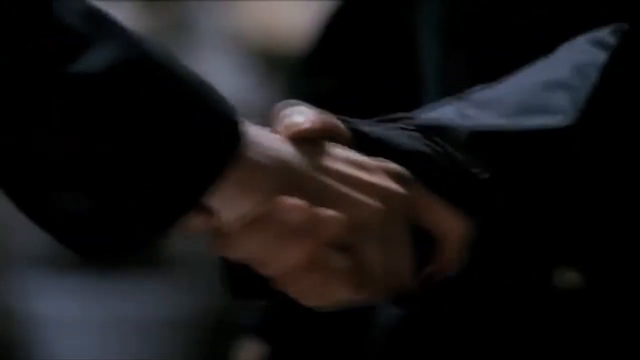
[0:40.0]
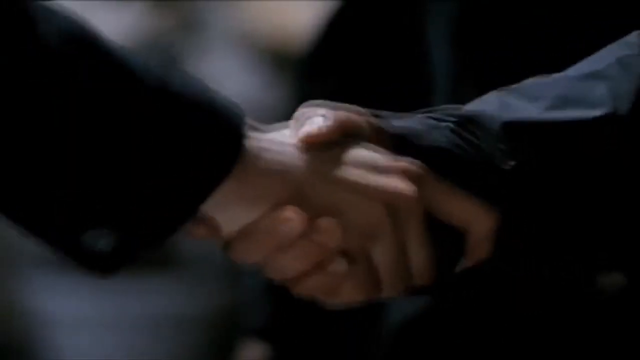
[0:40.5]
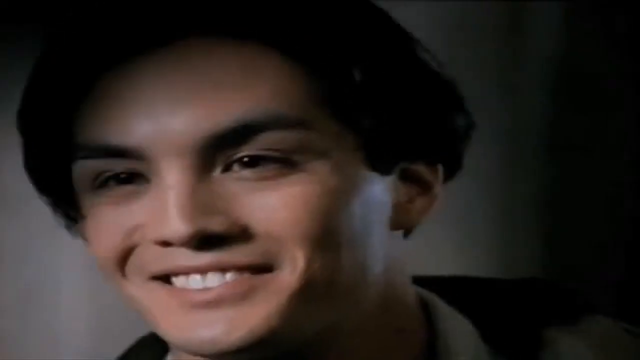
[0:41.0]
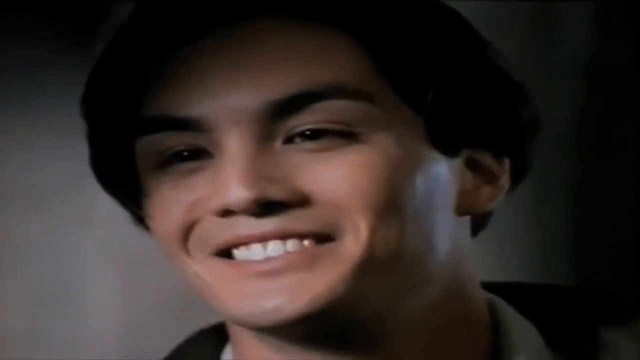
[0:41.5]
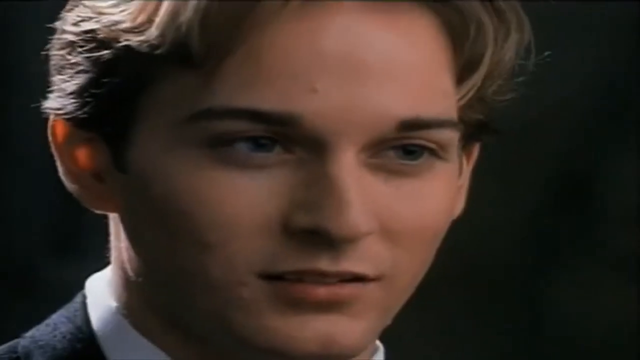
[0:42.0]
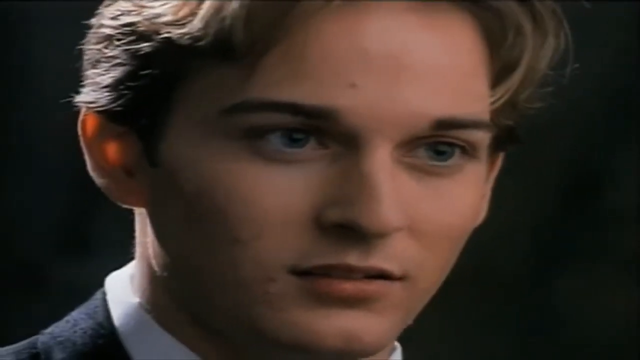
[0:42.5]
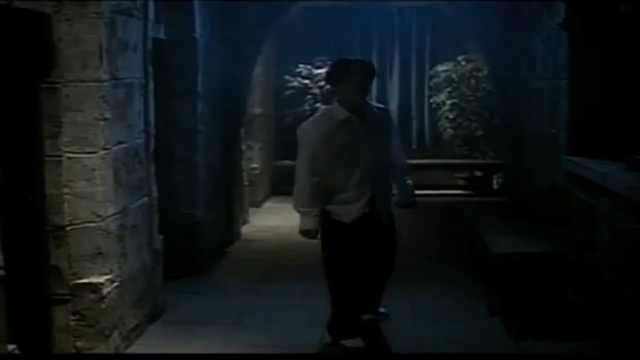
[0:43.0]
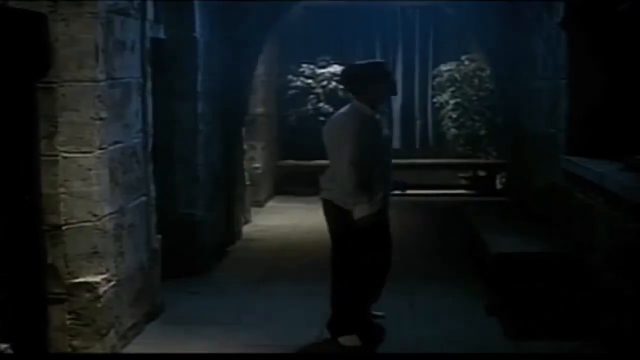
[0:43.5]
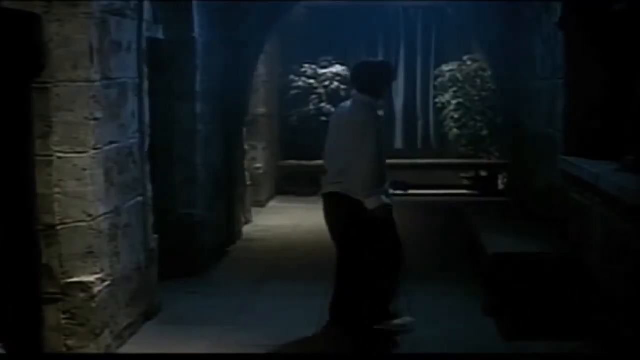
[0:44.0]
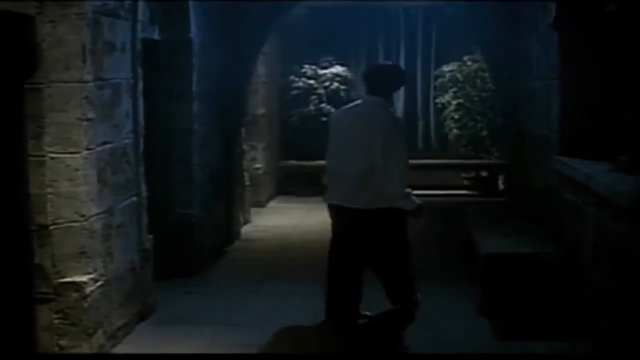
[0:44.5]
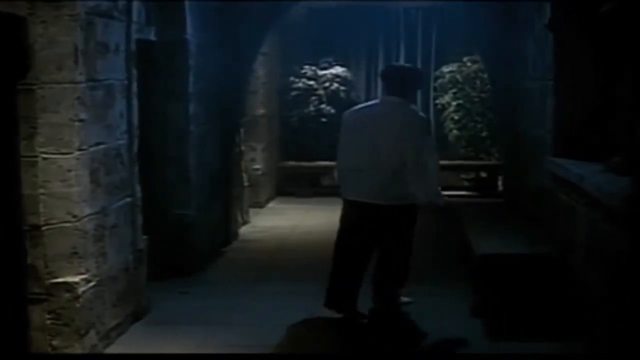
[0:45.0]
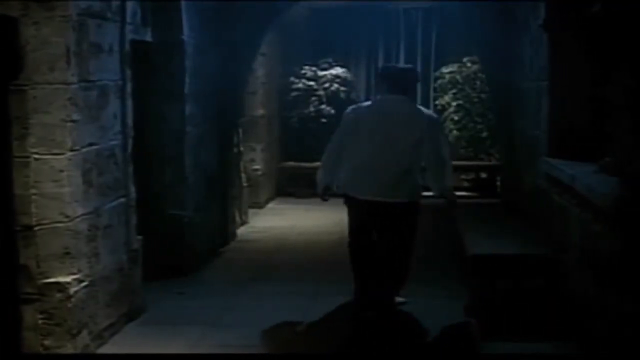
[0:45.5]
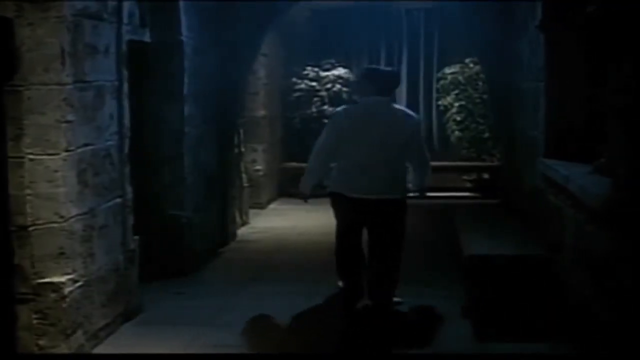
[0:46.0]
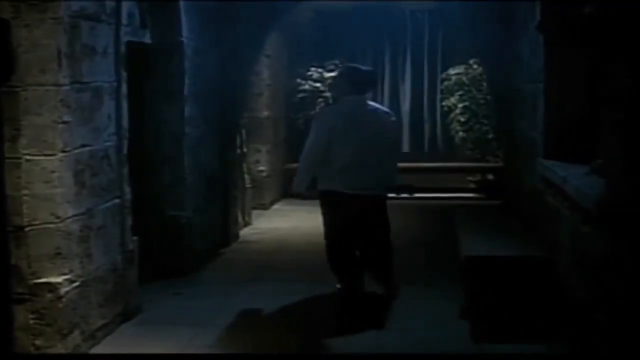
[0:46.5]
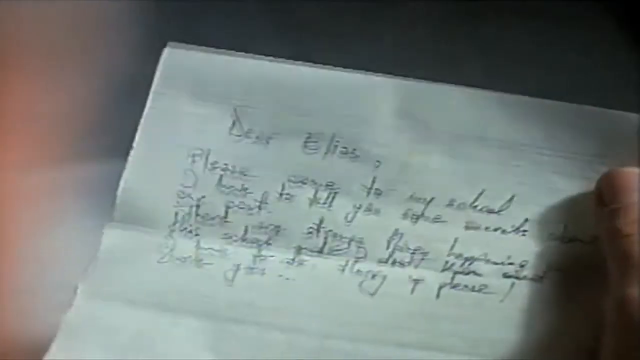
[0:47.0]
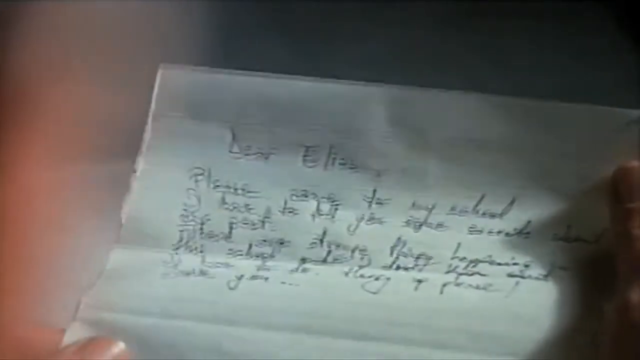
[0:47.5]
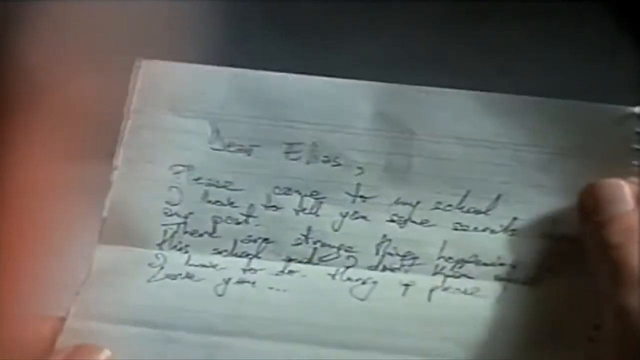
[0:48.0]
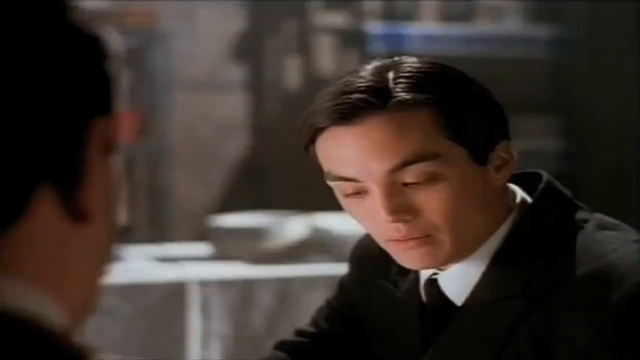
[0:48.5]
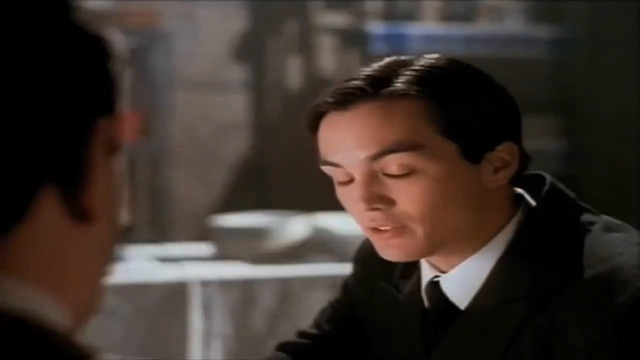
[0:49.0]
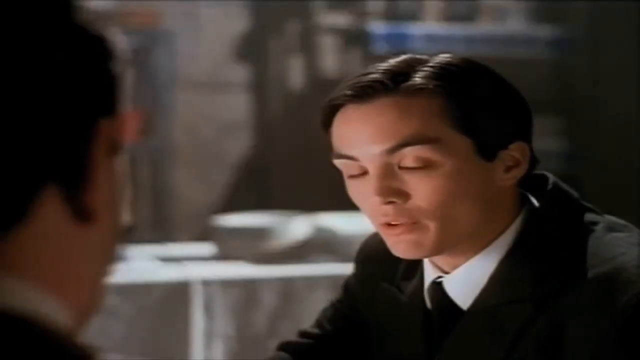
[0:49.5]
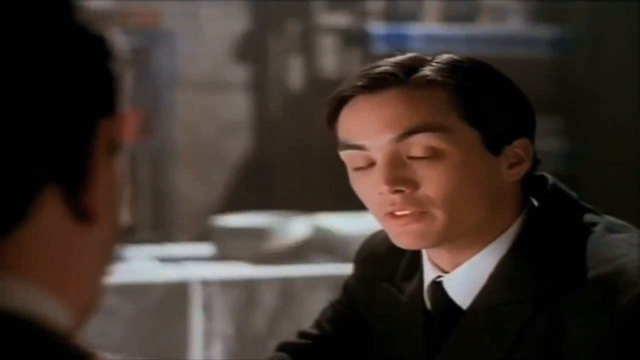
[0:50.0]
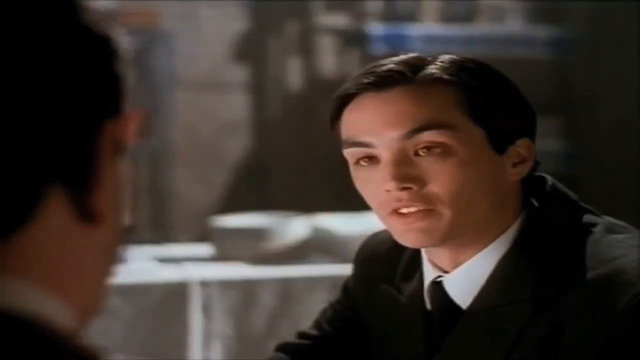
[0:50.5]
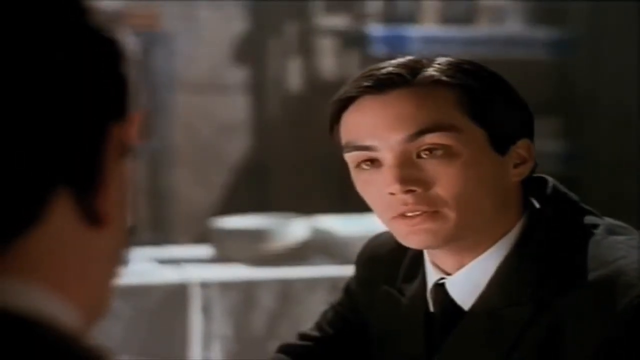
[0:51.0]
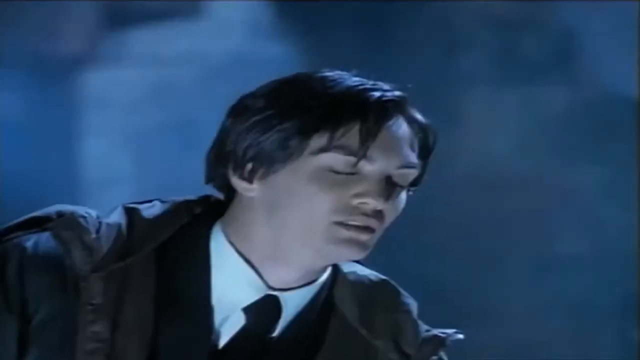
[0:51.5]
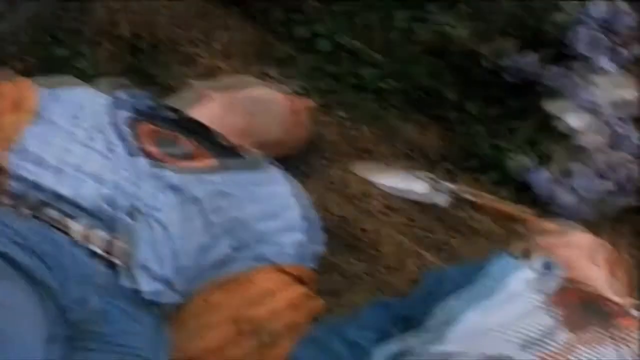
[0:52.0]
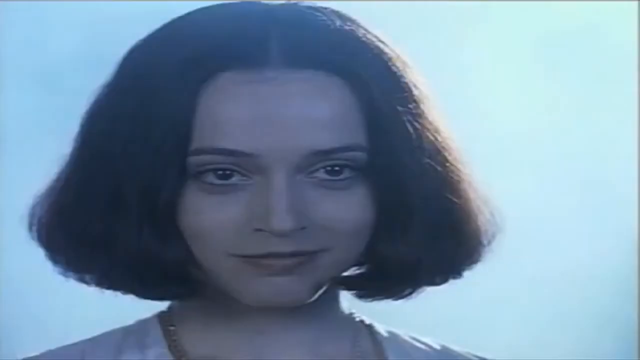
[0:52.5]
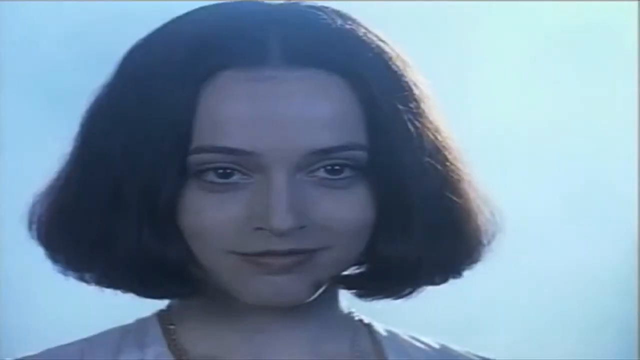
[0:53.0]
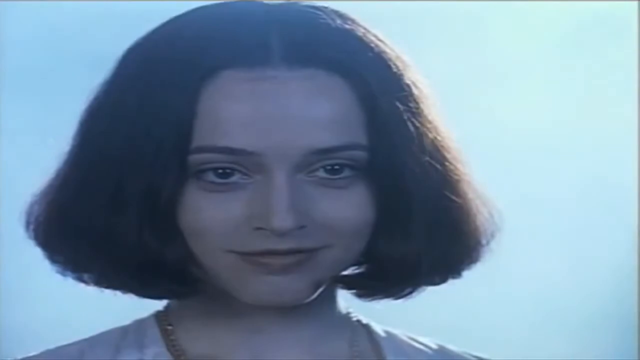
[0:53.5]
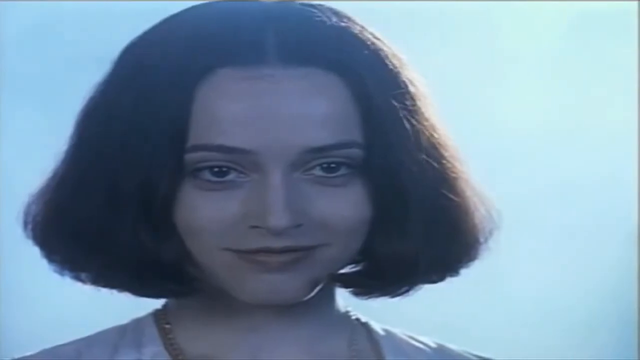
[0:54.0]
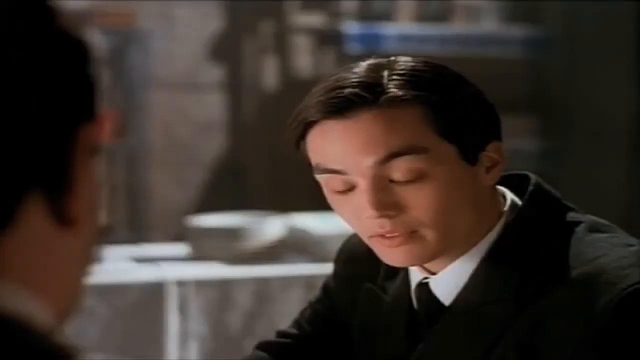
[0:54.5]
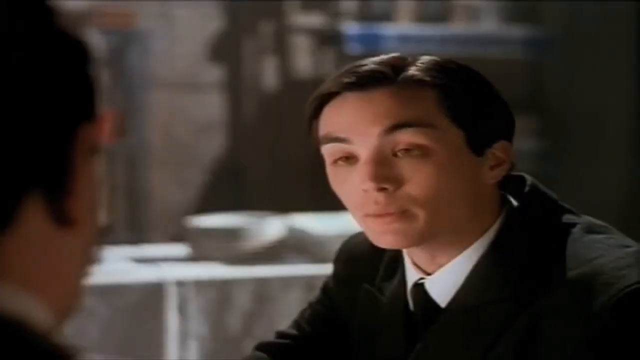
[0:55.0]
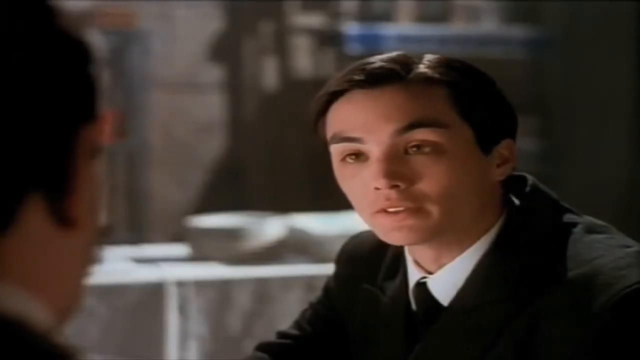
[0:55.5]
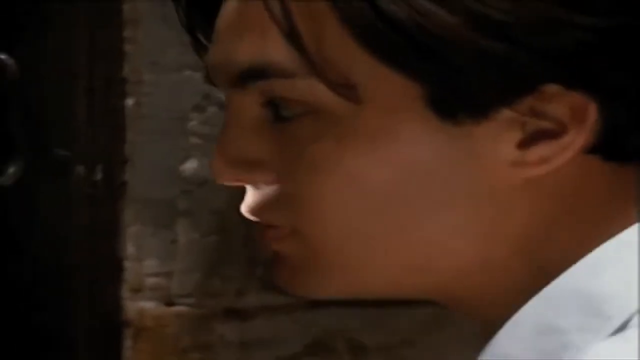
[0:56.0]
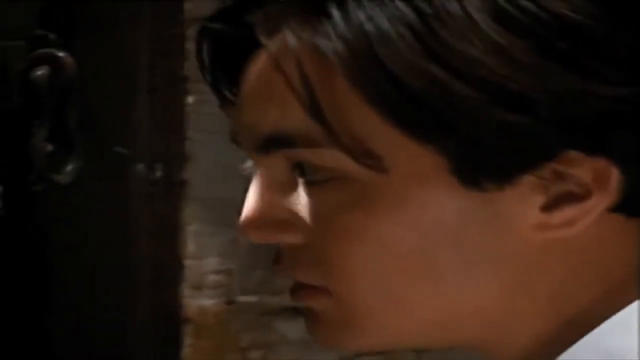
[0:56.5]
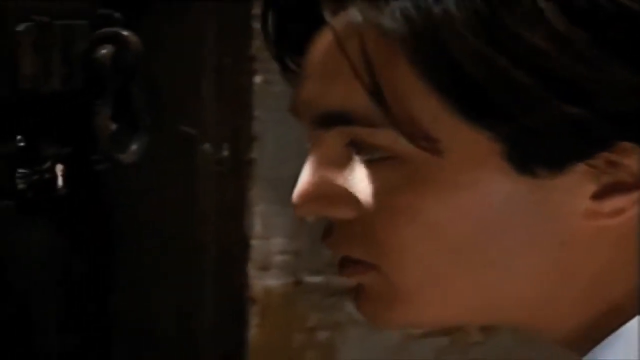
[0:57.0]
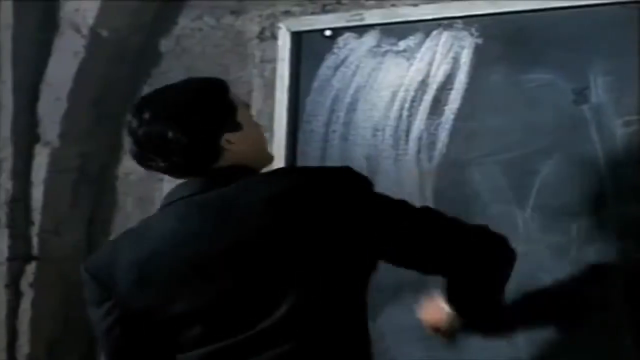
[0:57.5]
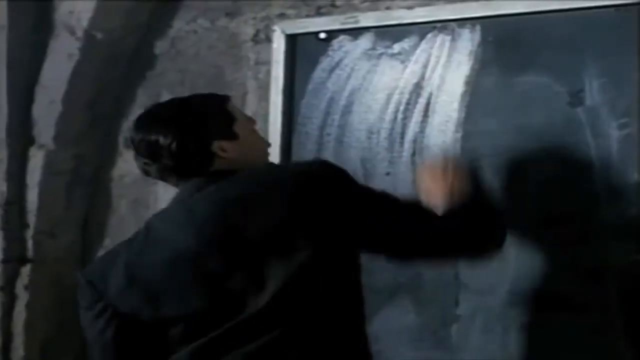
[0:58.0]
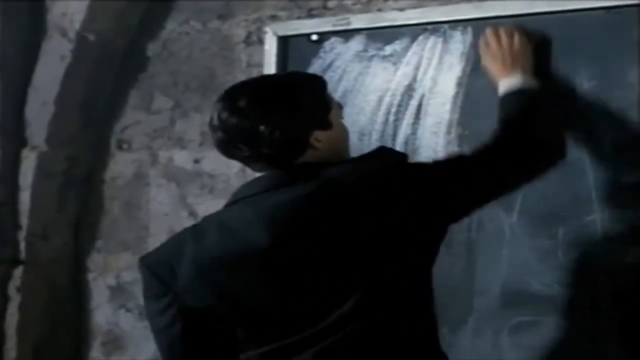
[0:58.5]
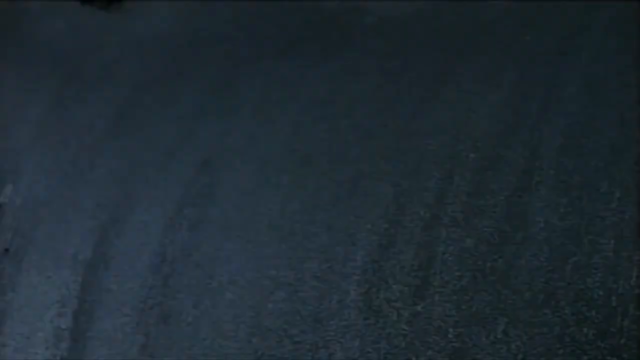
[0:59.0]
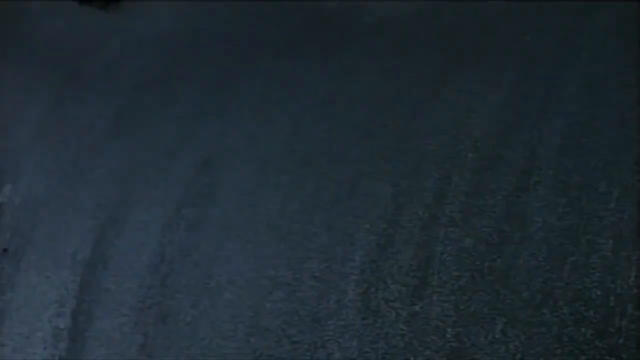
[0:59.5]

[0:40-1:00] A blonde man shakes hands with the dark-haired man who ran across the lawn. The dark-haired man is not wearing a suit at first; he walks around and looks around the mansion. The two then sit together talking at a table with a white tablecloth, possibly in the mansion or at a restaurant. Someone produces a letter to someone named Elise; it reads "please" and the rest cannot be read. The video then cuts to a pentagram, along with a flashback of two bodies on the ground, and a picture of a girl, possibly Elise. The dark-haired man peeks between some of the stones into a room, but what he sees is not shown. A man at a chalkboard erases something, the chalk turning white as he erases the board.